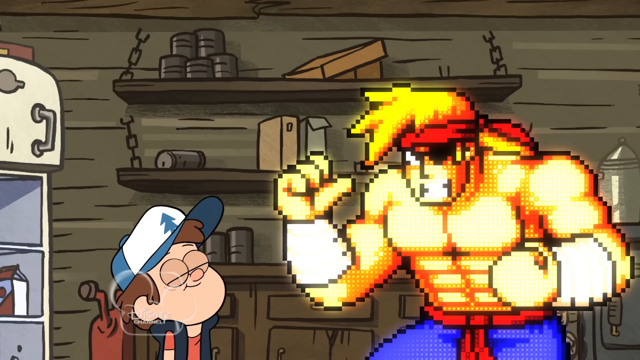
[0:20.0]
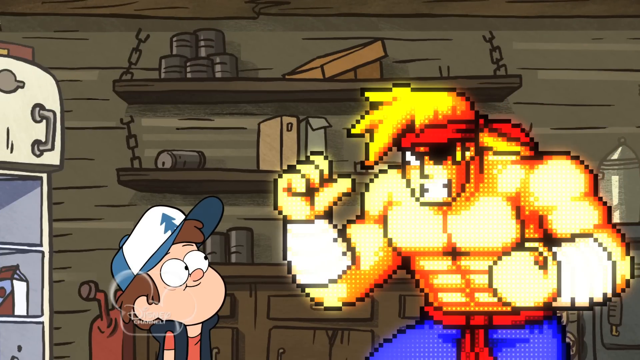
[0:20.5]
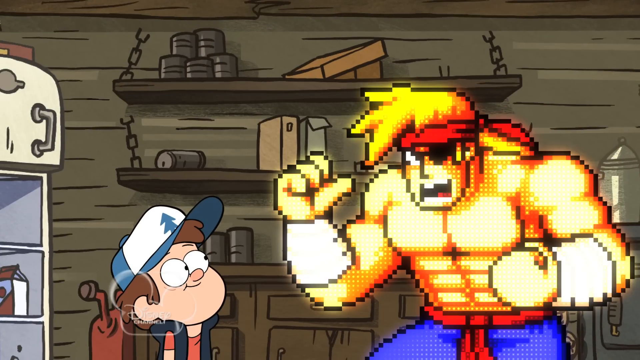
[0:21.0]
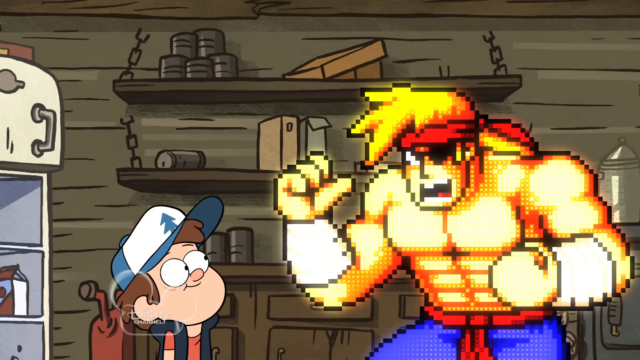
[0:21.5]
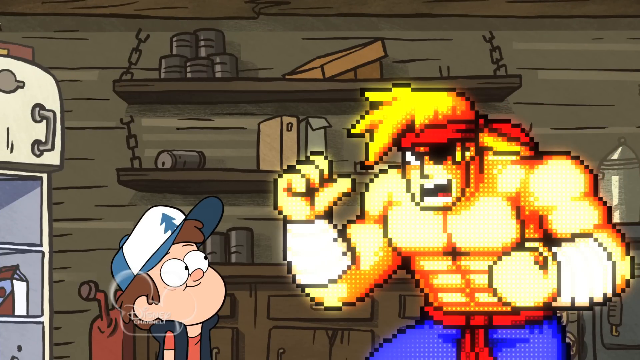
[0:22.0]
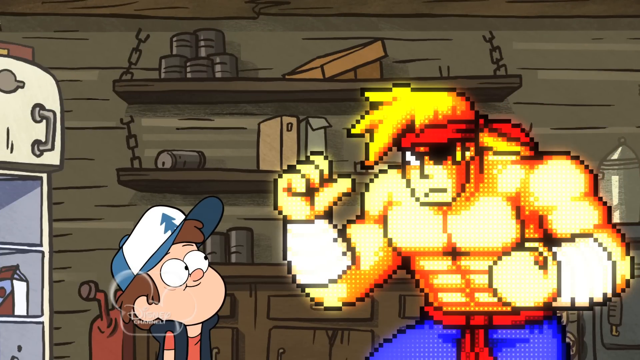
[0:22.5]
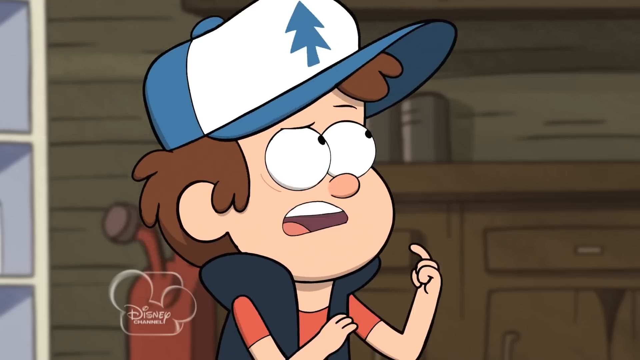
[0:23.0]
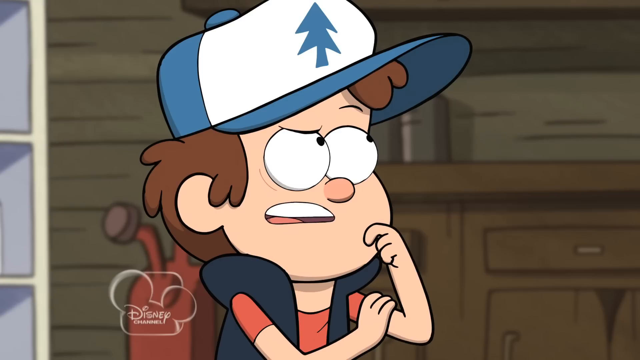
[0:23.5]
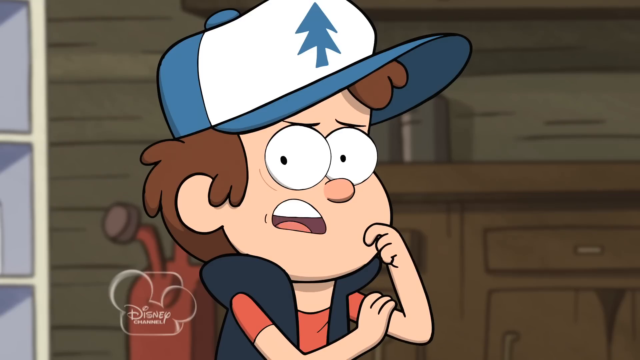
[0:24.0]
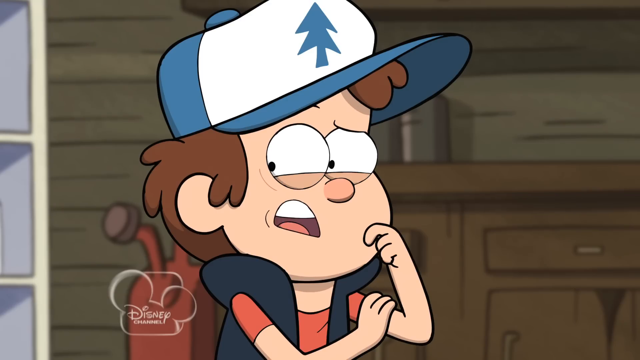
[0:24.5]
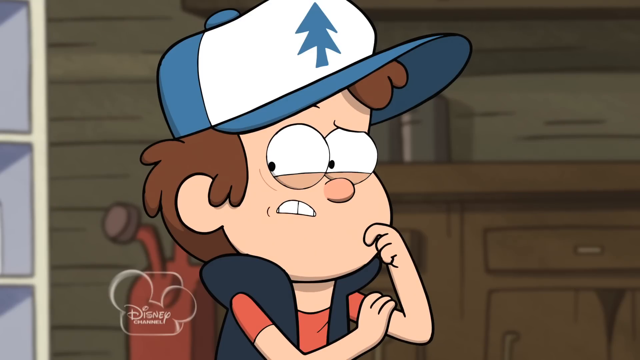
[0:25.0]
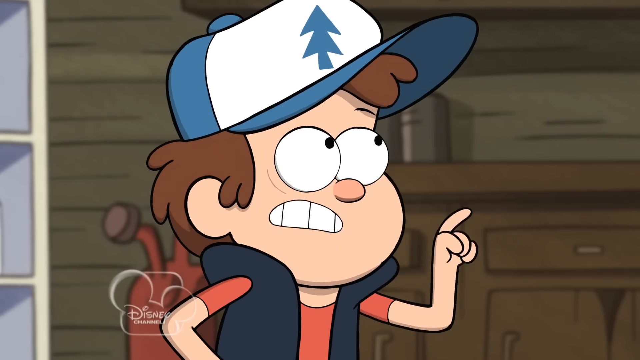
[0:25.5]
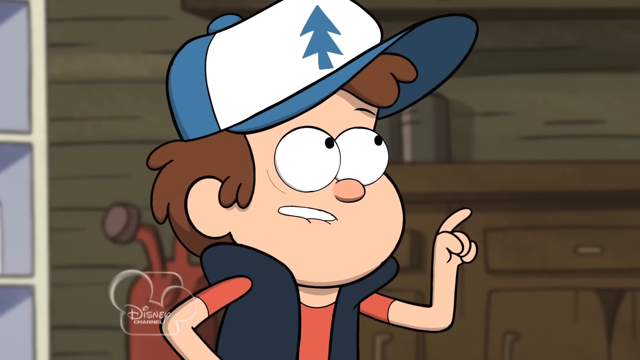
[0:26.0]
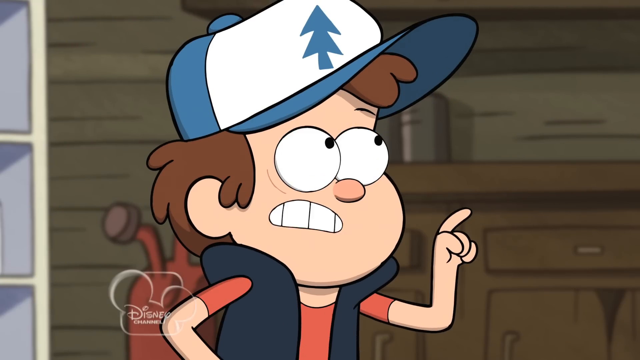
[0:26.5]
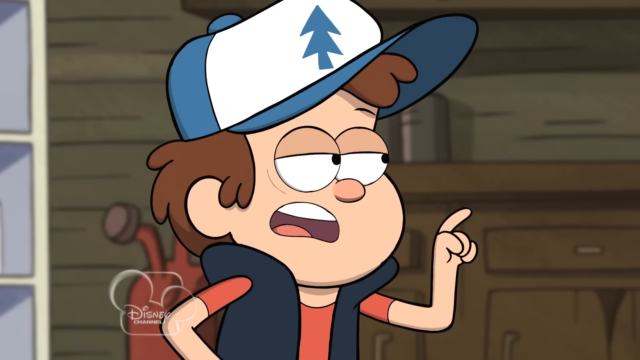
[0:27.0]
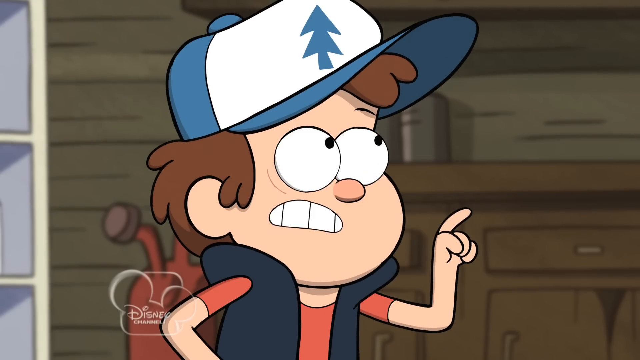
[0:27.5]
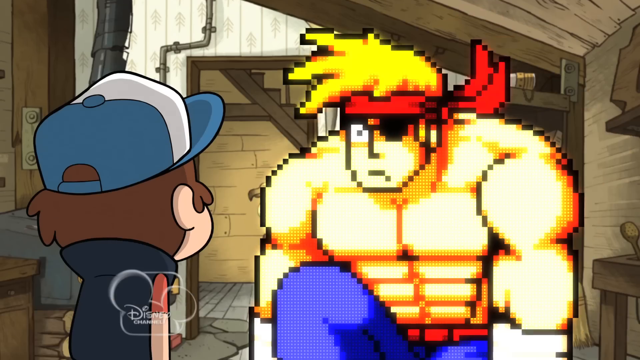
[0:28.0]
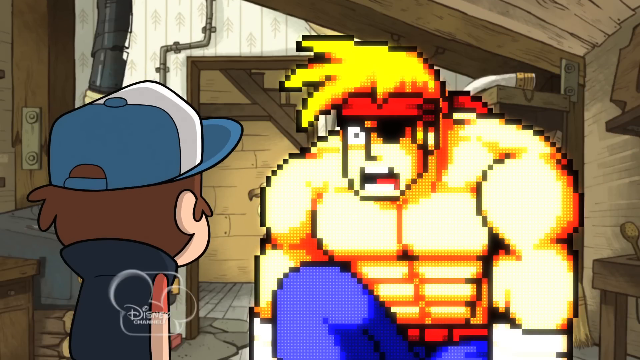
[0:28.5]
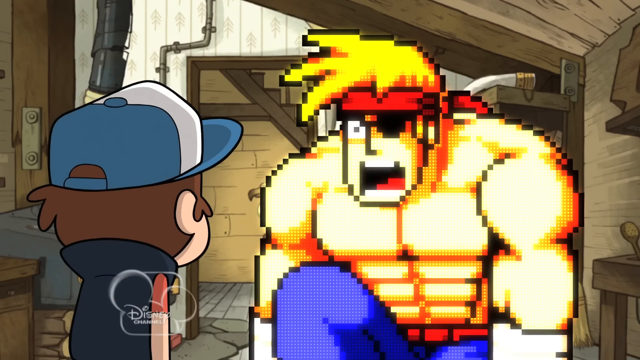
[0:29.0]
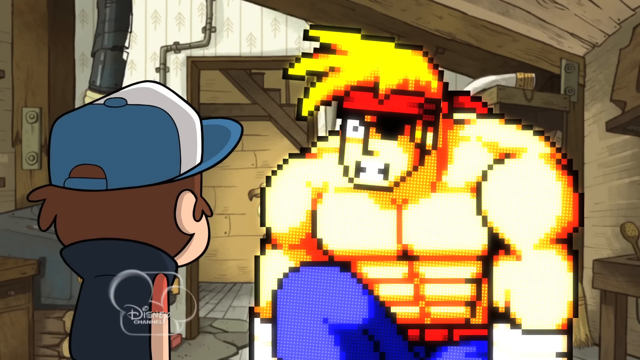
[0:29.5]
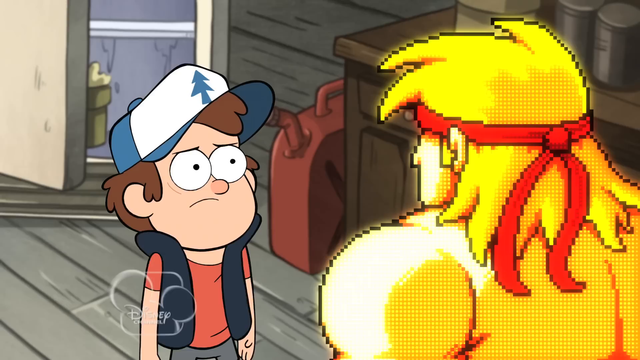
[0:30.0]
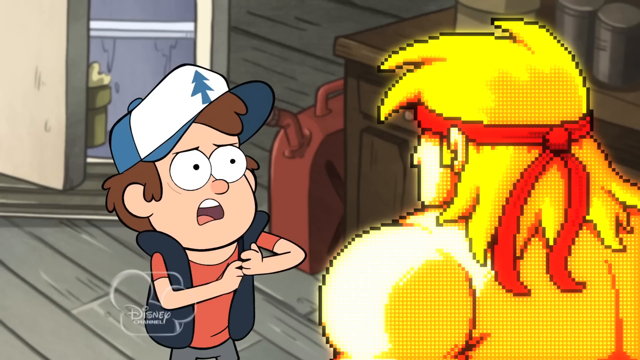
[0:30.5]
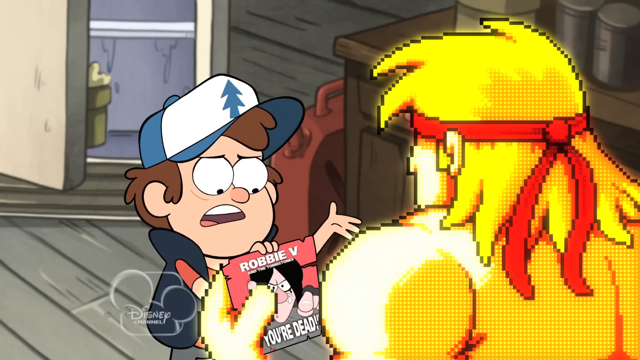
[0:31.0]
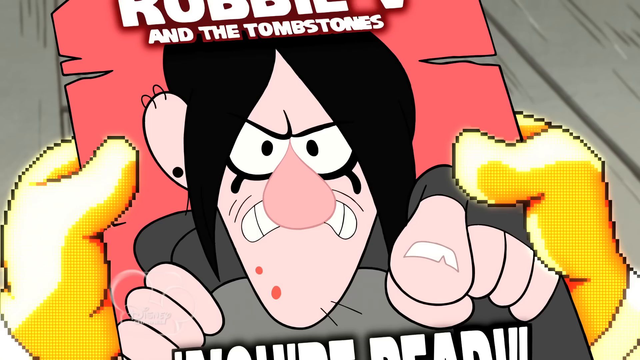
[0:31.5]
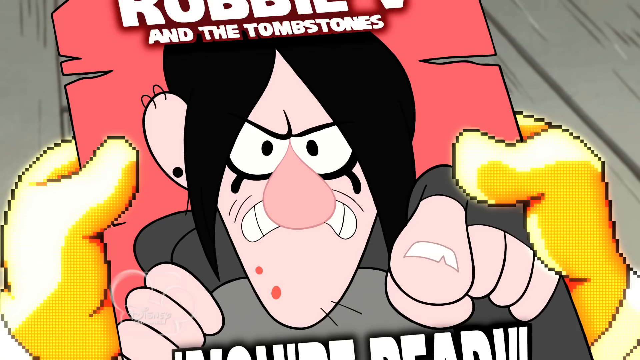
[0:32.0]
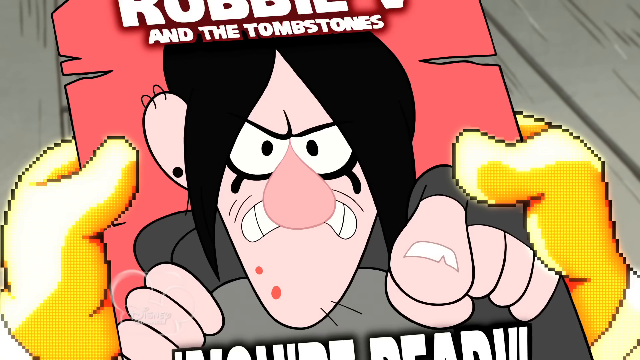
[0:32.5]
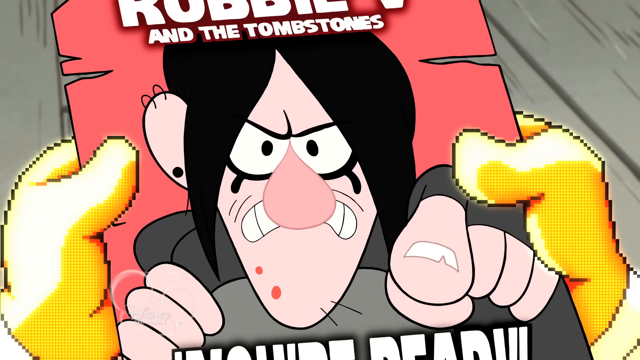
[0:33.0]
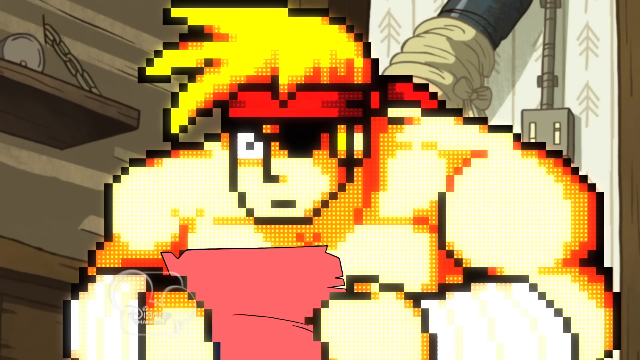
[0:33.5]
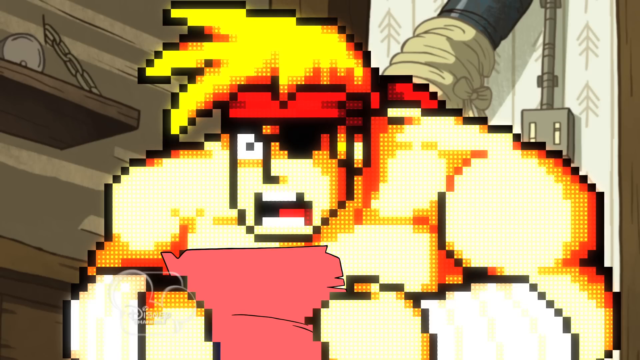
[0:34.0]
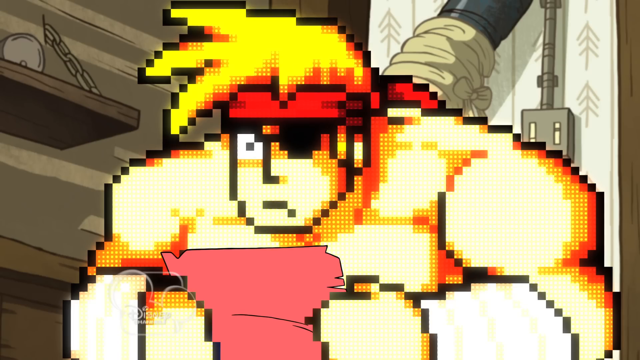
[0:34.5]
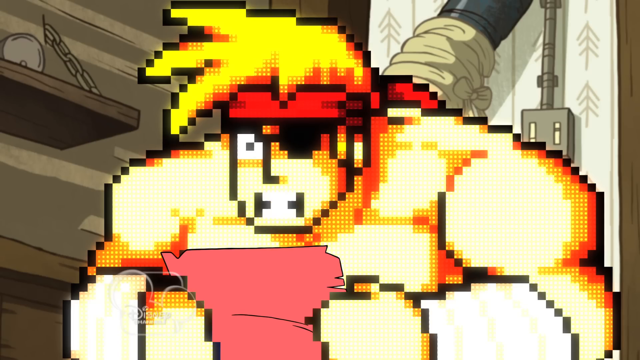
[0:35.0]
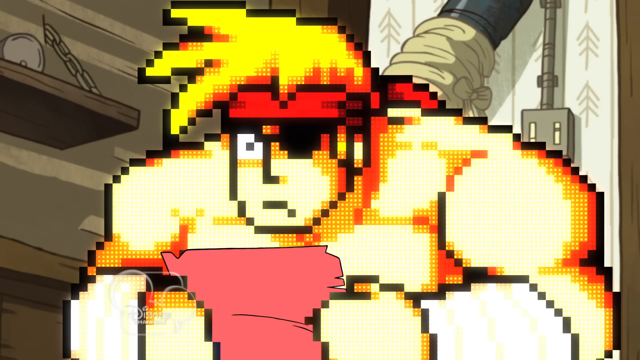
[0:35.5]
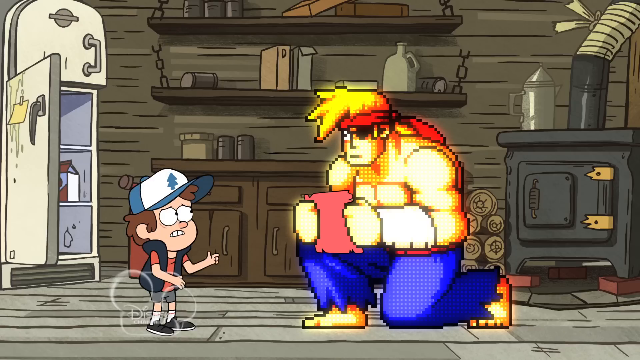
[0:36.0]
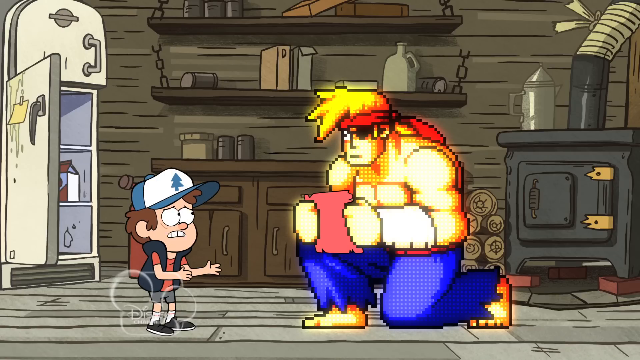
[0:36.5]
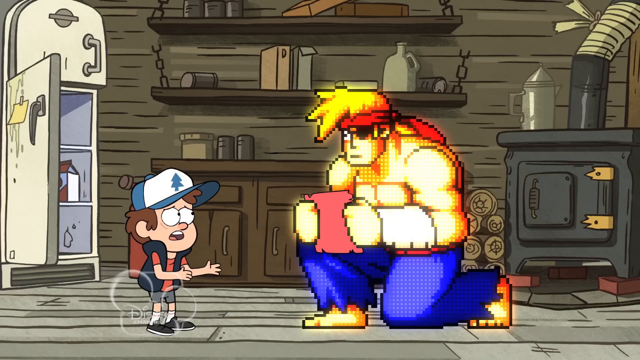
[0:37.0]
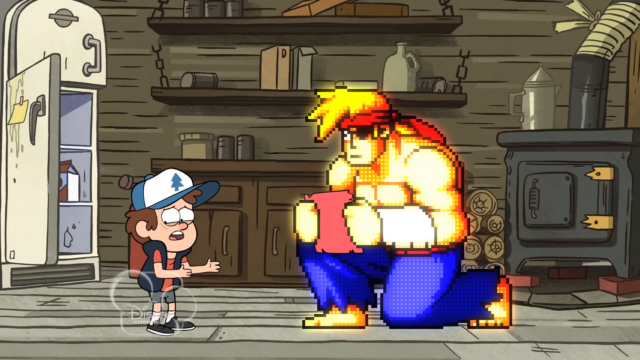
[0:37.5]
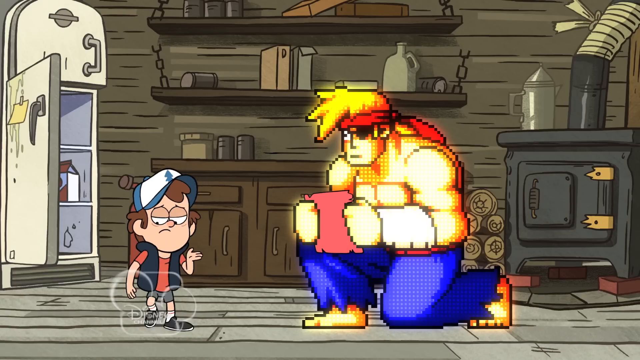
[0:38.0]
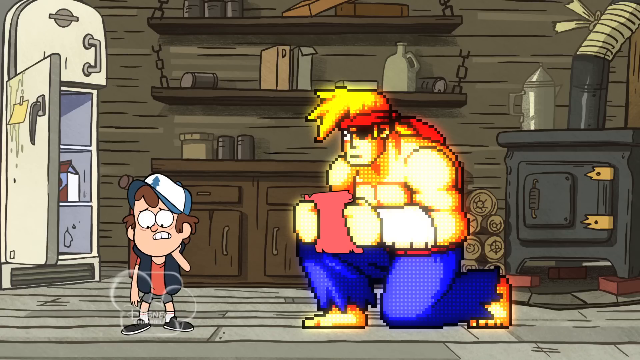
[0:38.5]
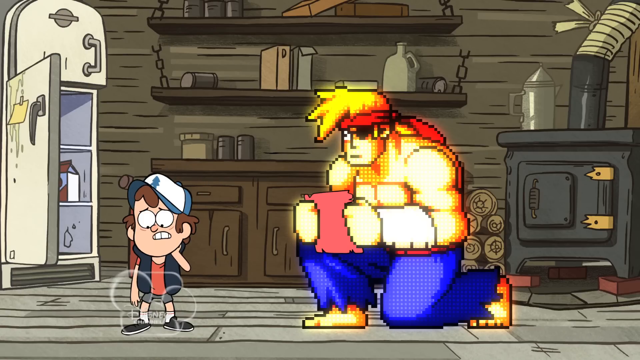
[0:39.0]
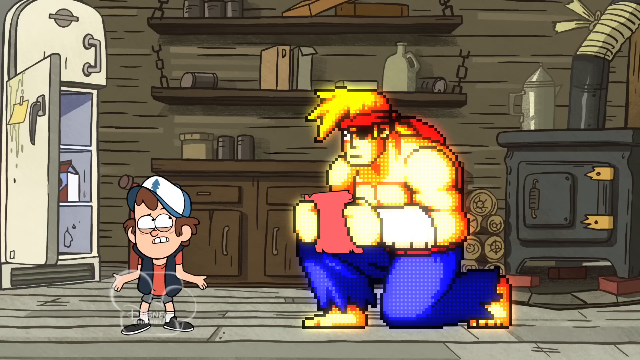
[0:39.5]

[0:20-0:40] In an animated scene, a Street Fighter character and a little boy have a conversation in a cabin that looks like it is in the woods; this appears to be the TV show Brickleberry, with the character on the left possibly one of its main characters. As the boy talks to the Street Fighter character, he puts his hand up to his chin as if thinking, then starts pointing at the Street Fighter character. The boy pulls a poster out from his shirt and hands it over. It says "Robbie and the Tombstones" and appears to be a band photo with a character on it pointing forward. The Street Fighter character reads the poster as the two continue their conversation. The cabin is stocked: it has shelves with items on them, a refrigerator with items in it, a stove, a gas pan on the floor, and light switches.